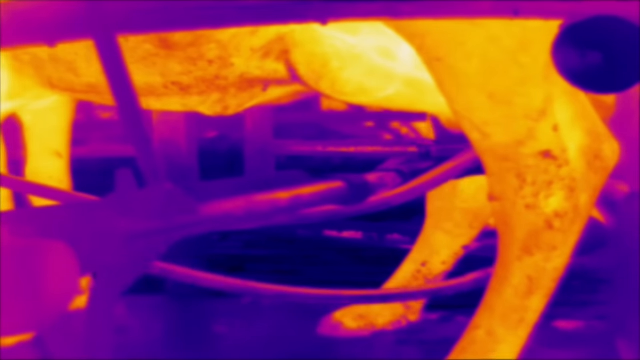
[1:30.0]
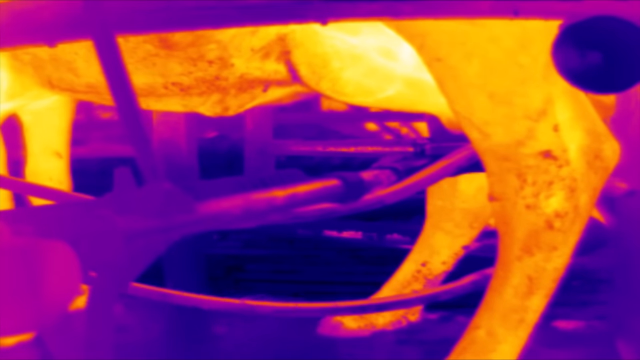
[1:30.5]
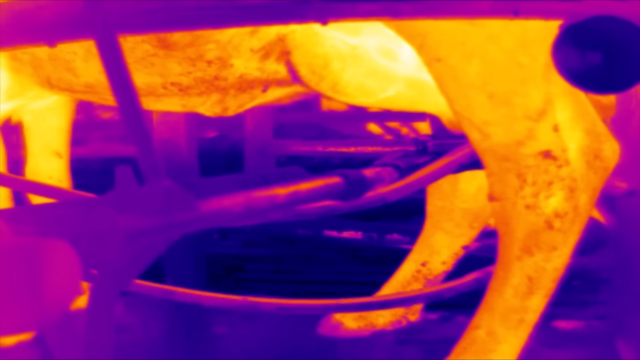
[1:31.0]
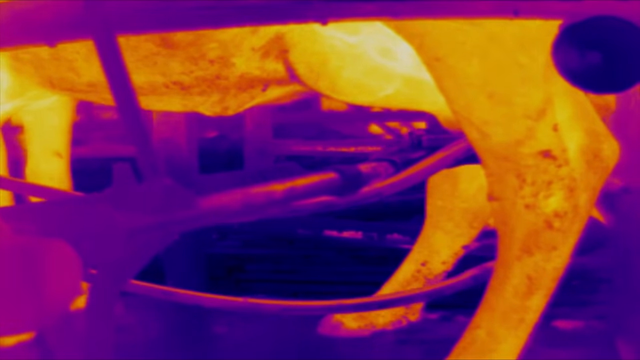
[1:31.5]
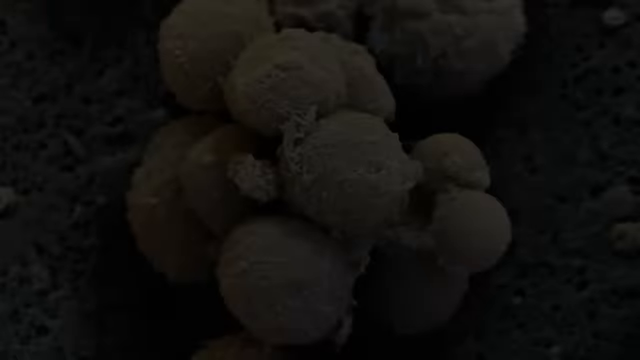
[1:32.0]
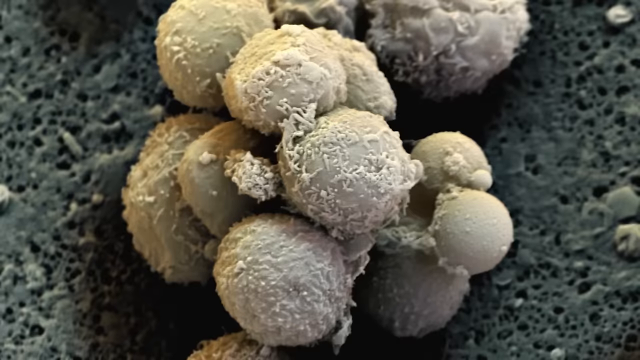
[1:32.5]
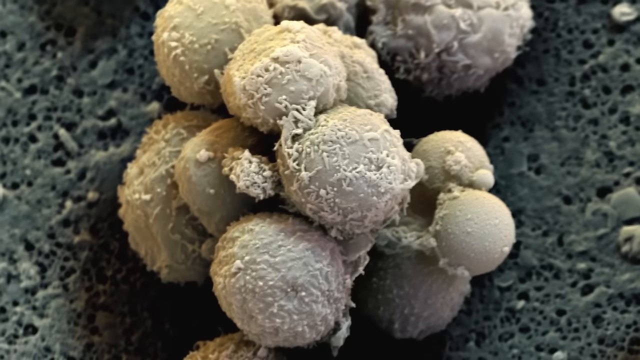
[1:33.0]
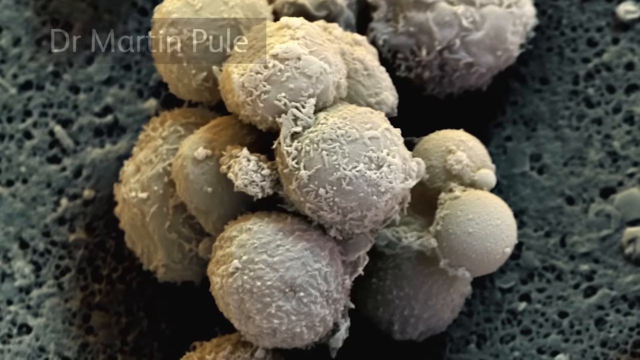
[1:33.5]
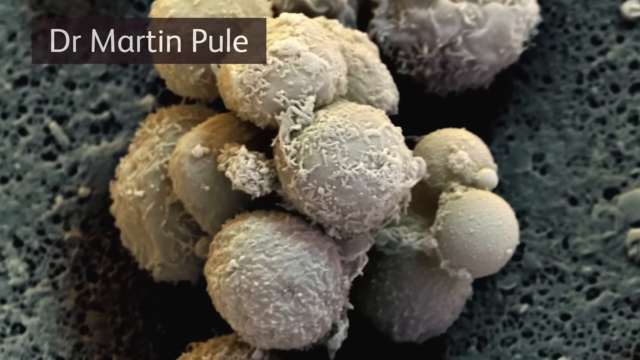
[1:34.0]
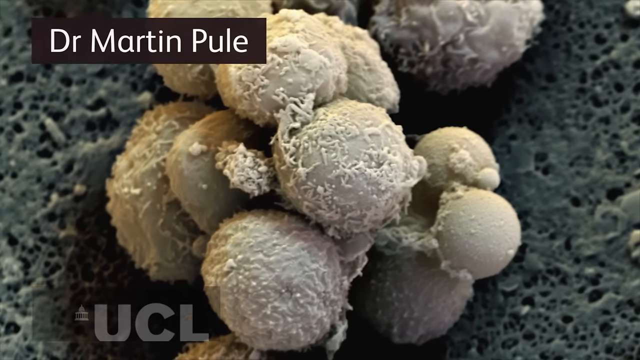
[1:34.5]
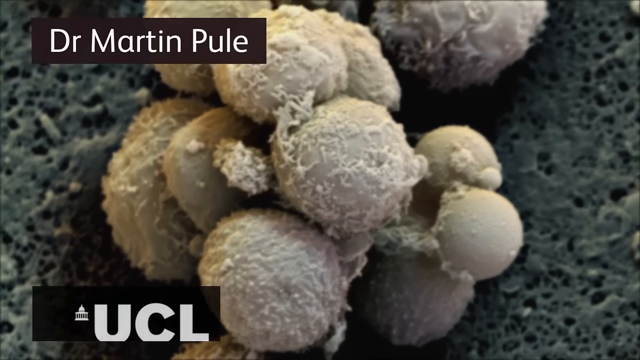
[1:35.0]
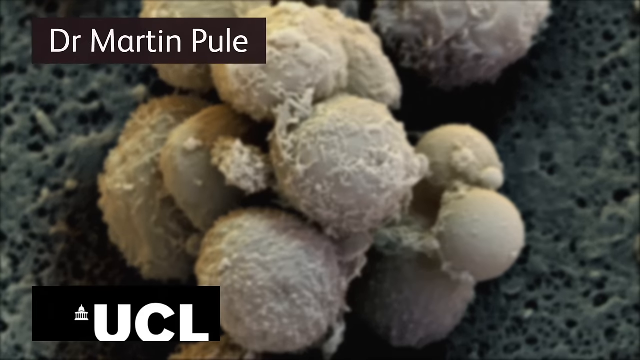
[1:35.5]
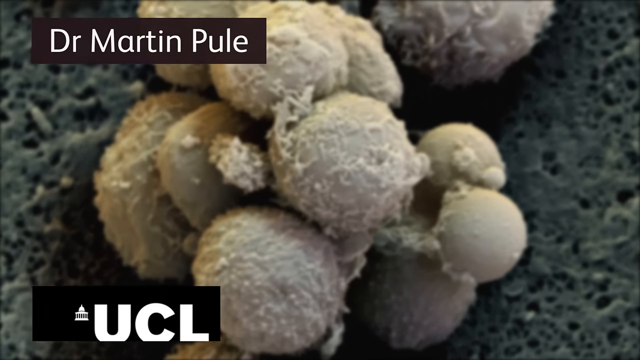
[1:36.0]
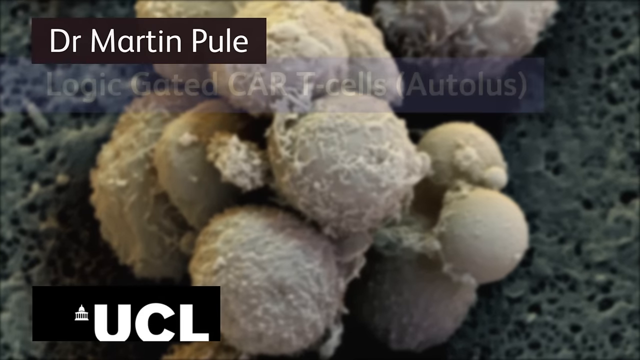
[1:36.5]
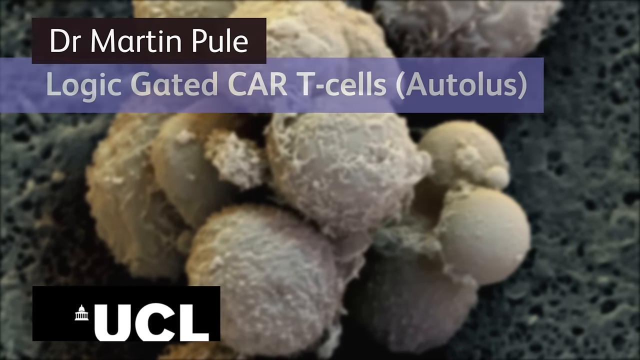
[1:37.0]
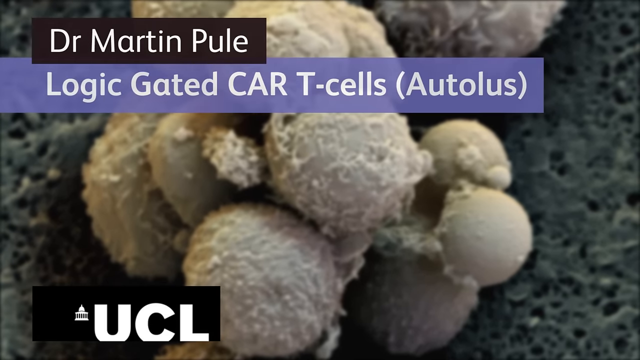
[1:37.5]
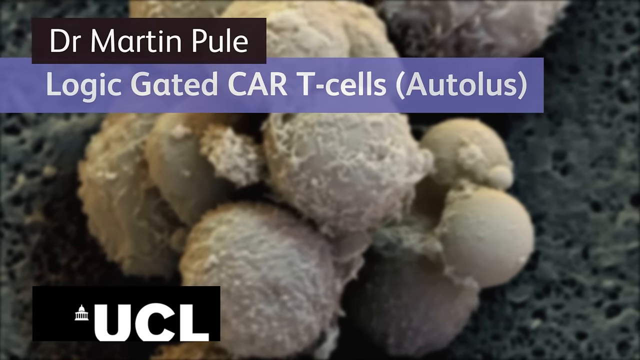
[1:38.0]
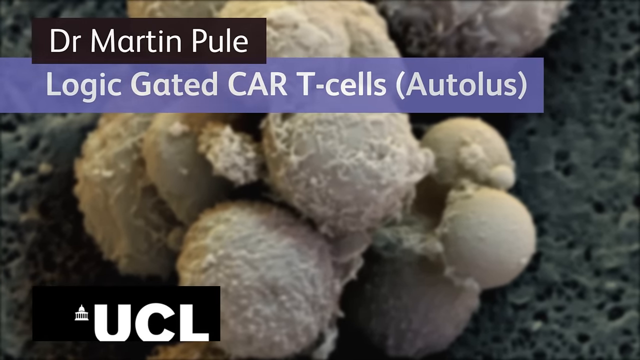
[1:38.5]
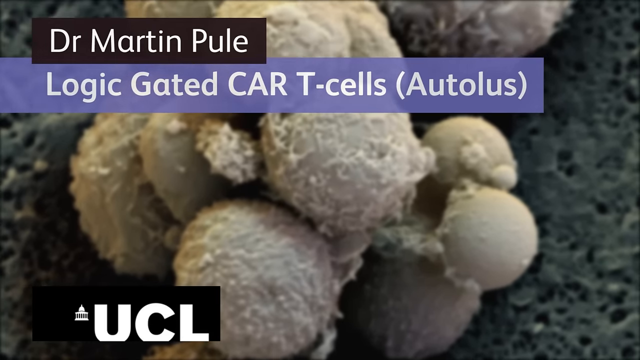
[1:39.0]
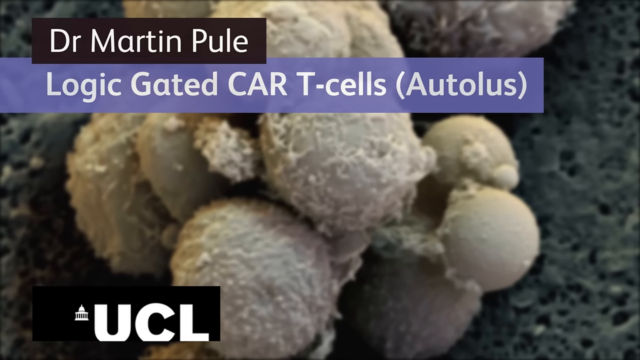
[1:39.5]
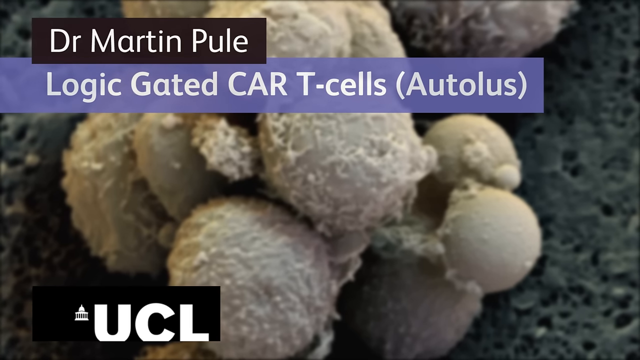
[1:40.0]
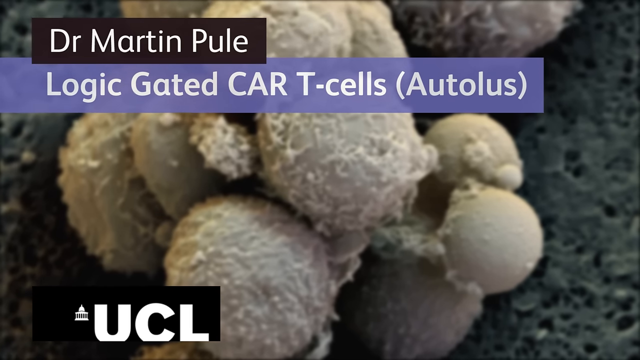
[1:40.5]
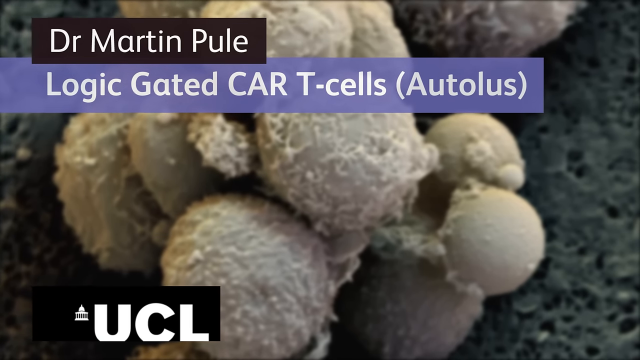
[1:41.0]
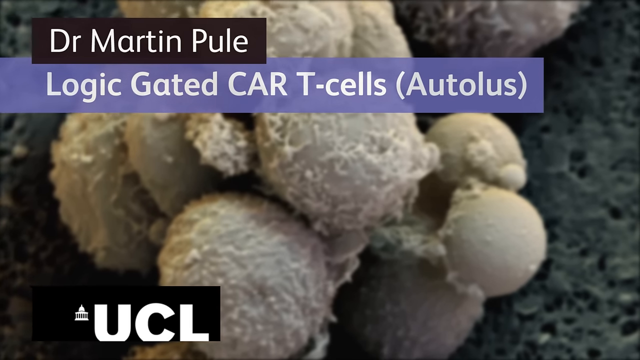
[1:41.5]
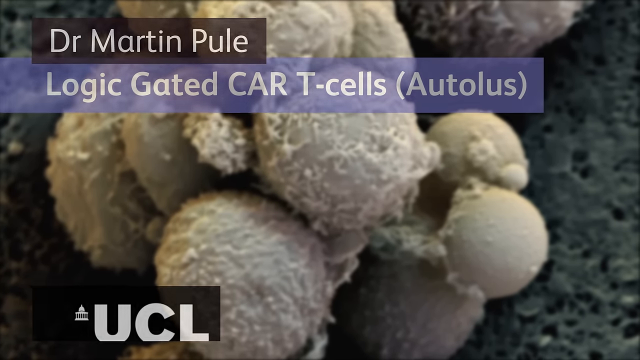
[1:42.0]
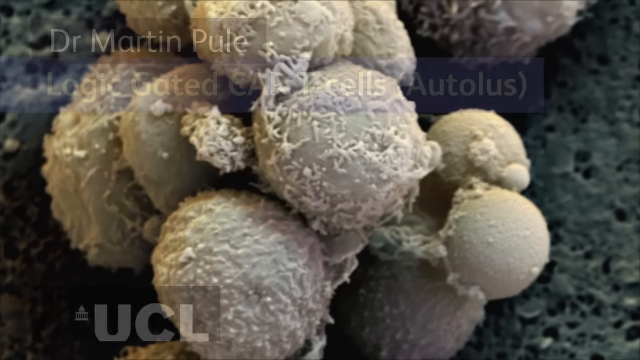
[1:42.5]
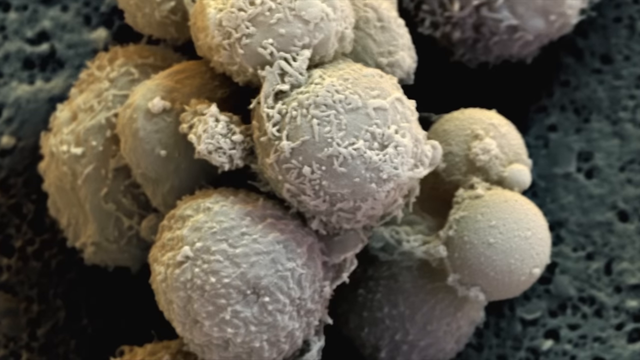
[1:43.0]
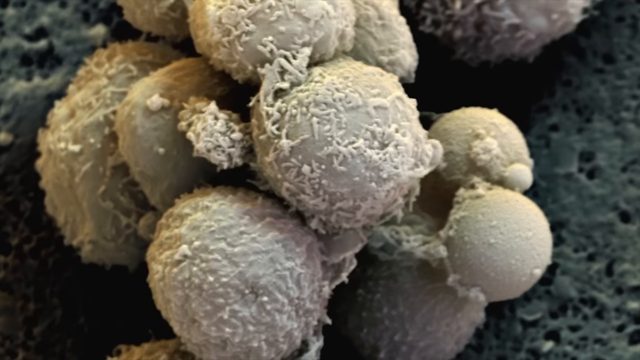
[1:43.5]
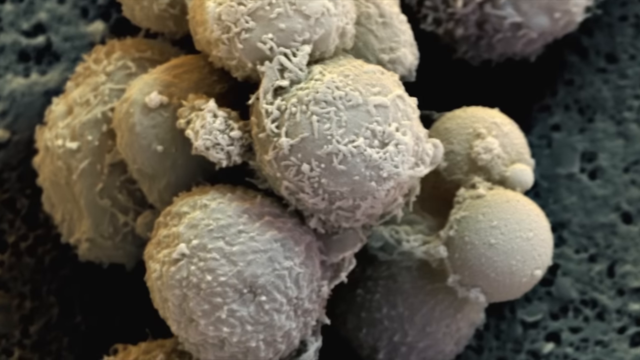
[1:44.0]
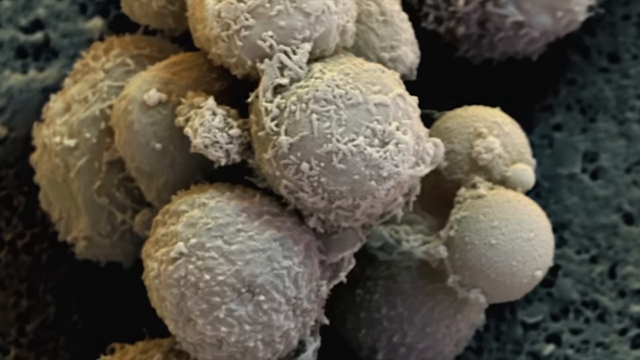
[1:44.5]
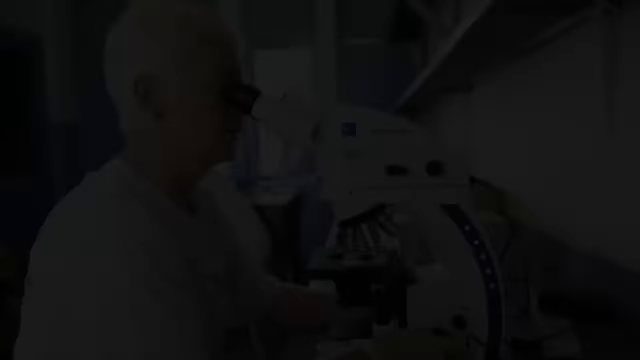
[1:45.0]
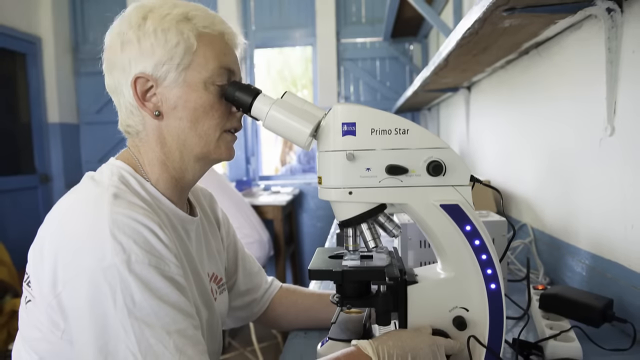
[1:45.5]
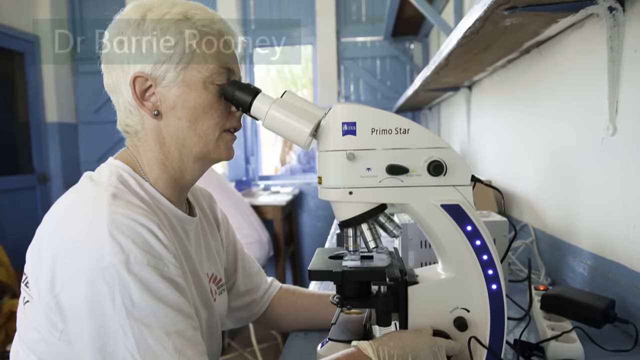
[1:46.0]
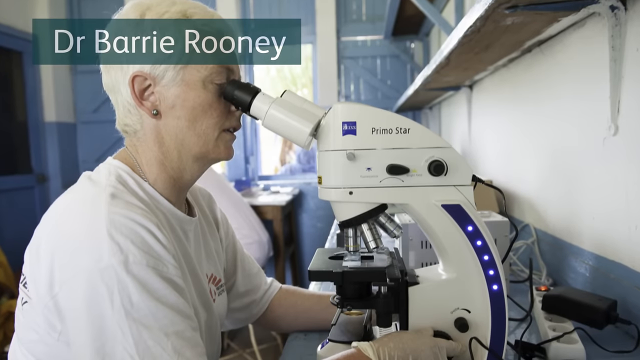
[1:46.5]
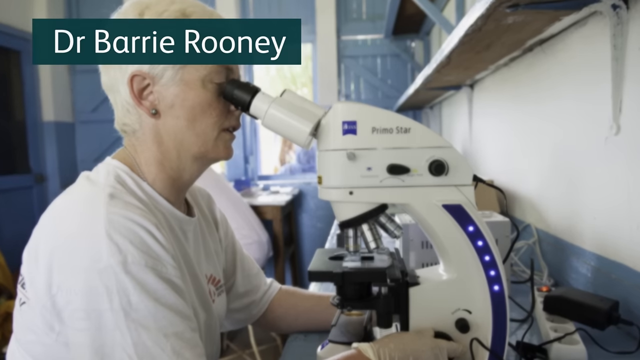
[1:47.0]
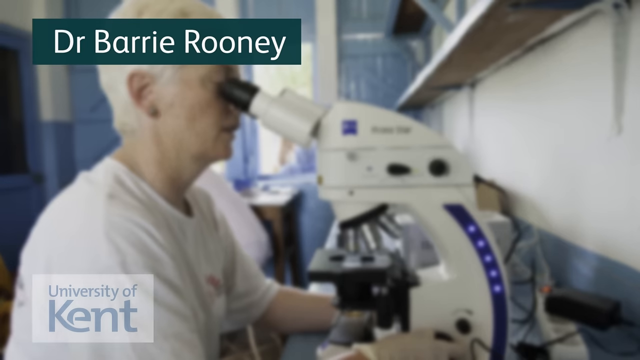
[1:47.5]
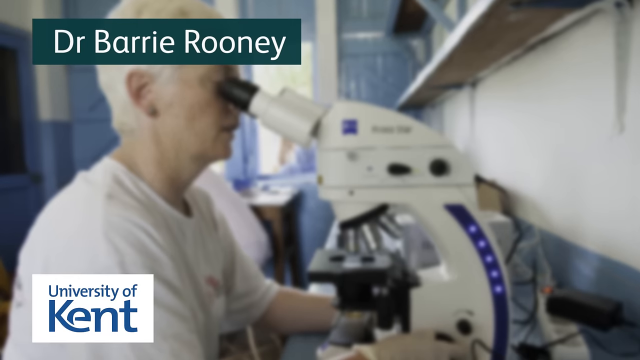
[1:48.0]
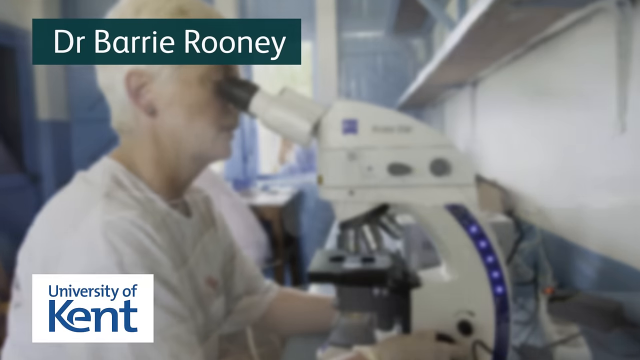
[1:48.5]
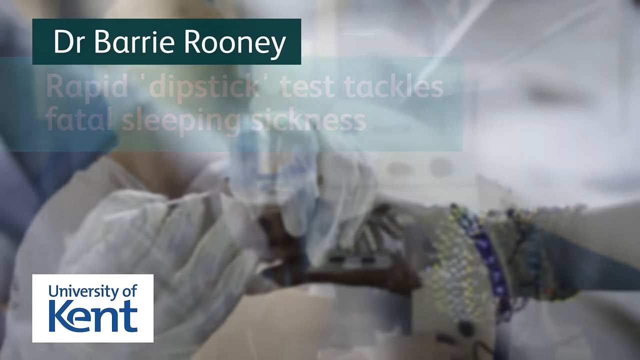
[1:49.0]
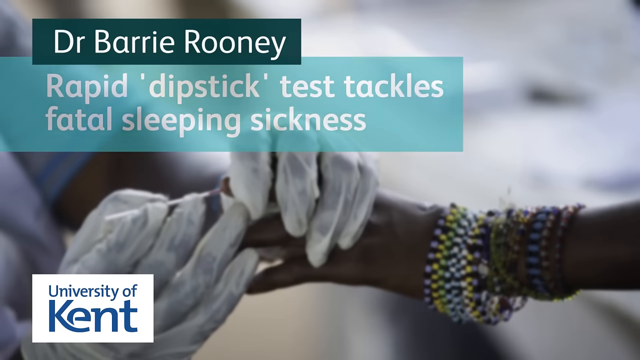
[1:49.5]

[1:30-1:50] What looks like a thermal image of the underneath of a cow shows its back legs and front legs glowing orange and yellow, while the rest of the image is purple and blue. There appear to be hoses hooked up. The scene switches to an image of something under a microscope: little white balls that look kind of fuzzy. Text at the top left reads "Dr. Martin Puhl", text at the bottom reads "UCL", and below the name it reads "logic-graded CAR T-cells (autoliths)". Next is a picture of a Caucasian woman with white hair in a white t-shirt looking into a large white microscope, her face turned toward the right of the screen. Text at the top reads "Dr. Barry Rooney" and at the bottom "University of Kent".